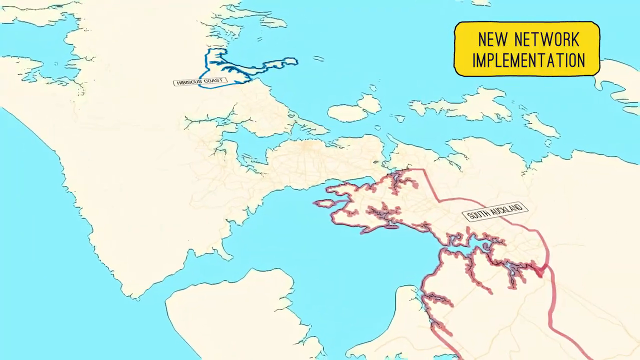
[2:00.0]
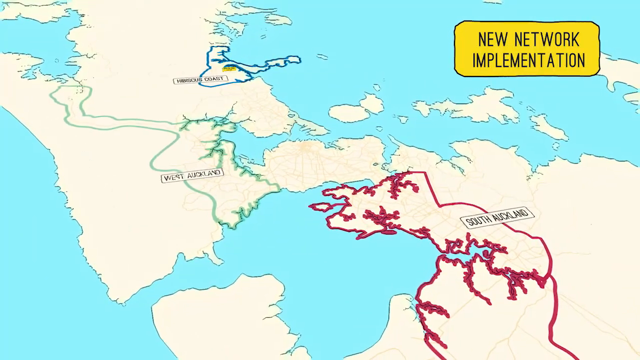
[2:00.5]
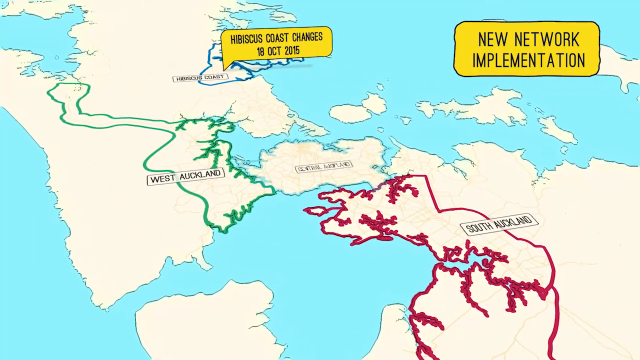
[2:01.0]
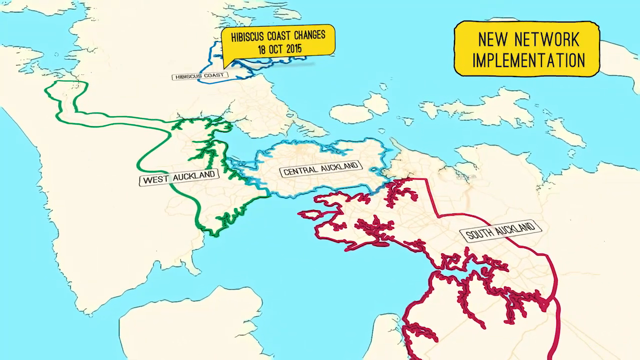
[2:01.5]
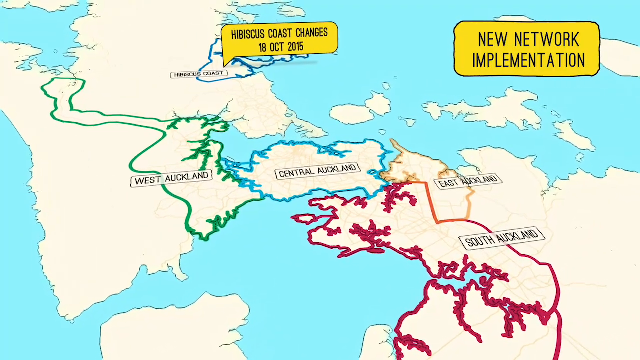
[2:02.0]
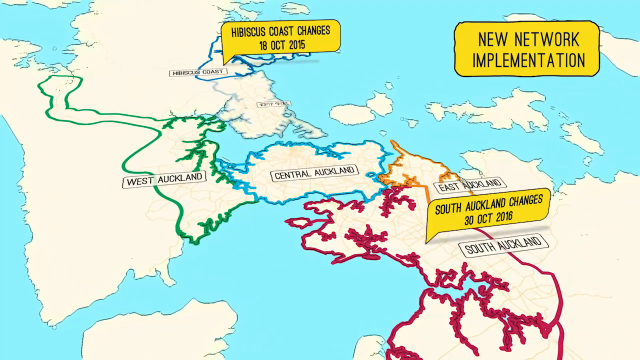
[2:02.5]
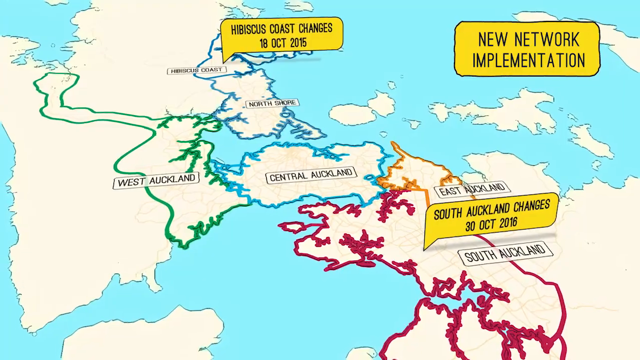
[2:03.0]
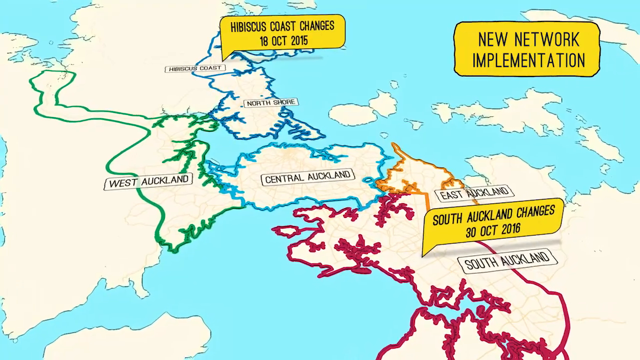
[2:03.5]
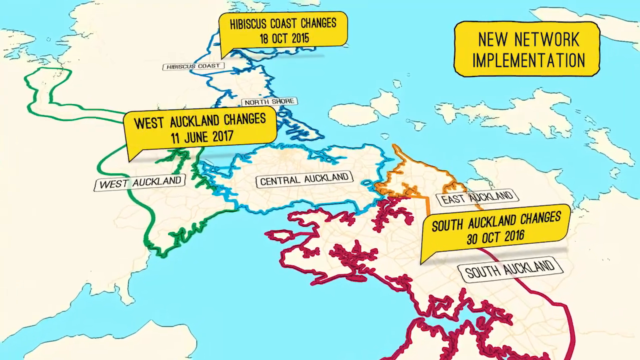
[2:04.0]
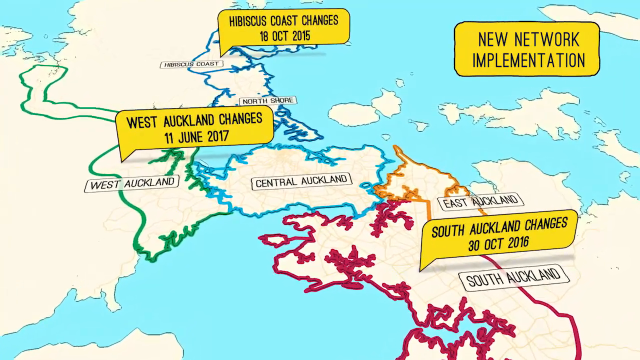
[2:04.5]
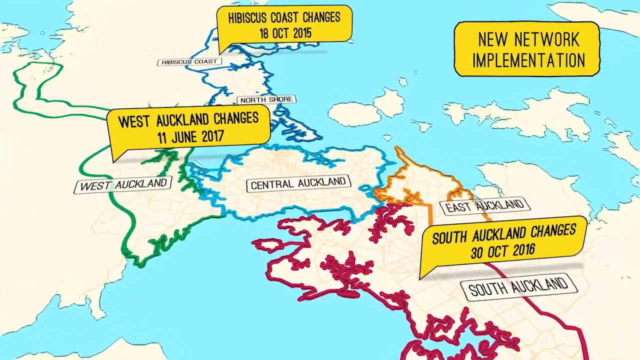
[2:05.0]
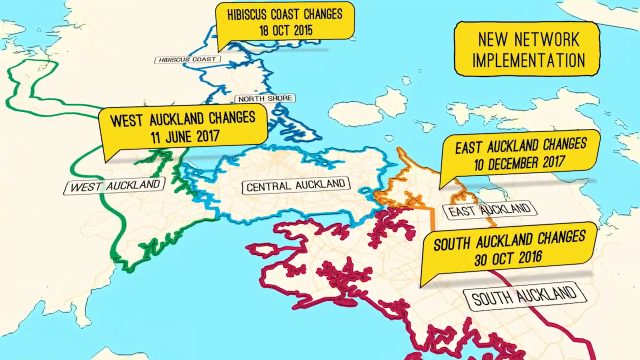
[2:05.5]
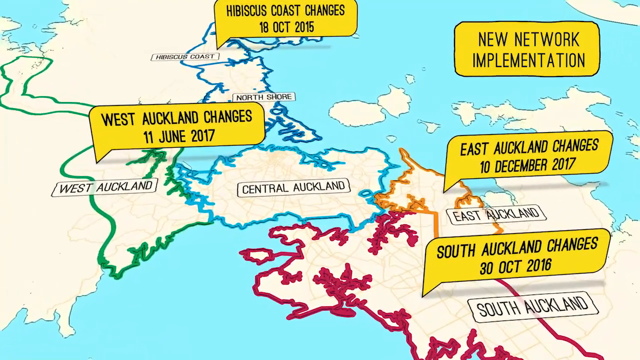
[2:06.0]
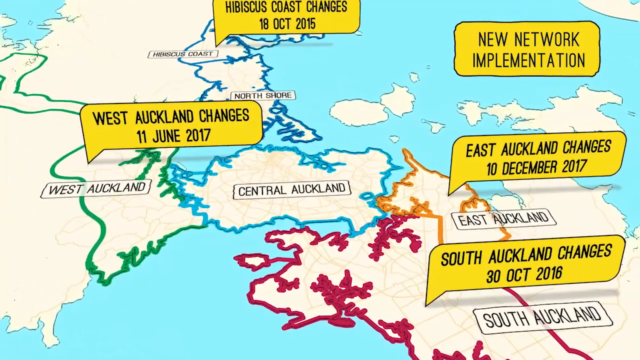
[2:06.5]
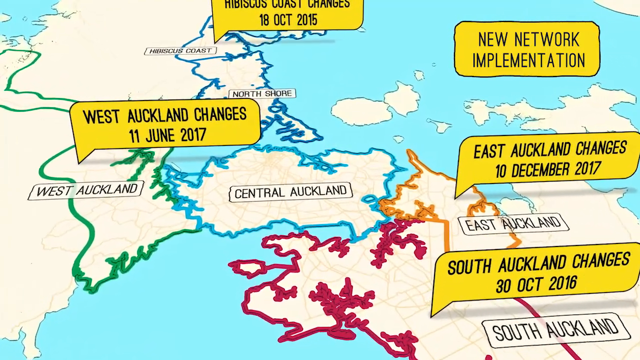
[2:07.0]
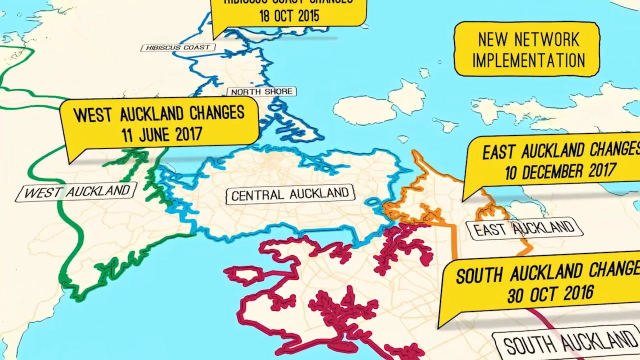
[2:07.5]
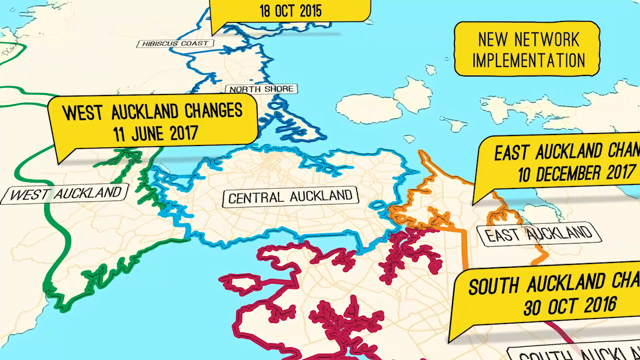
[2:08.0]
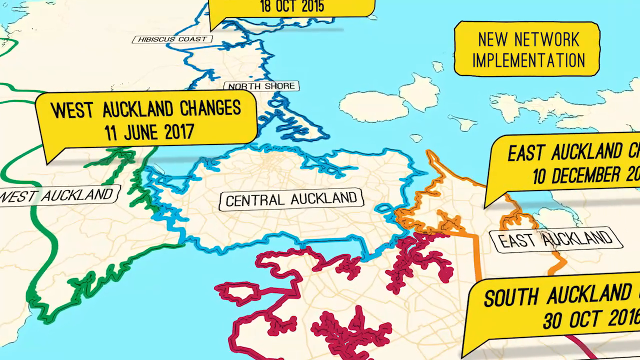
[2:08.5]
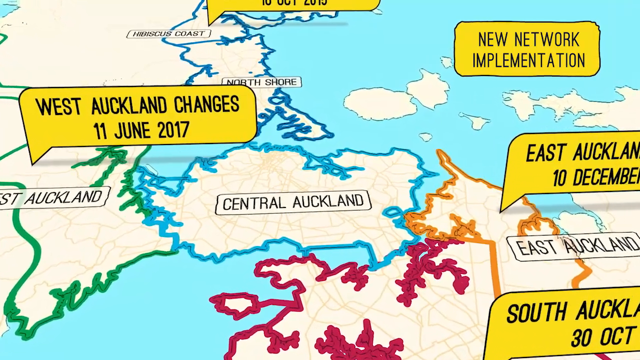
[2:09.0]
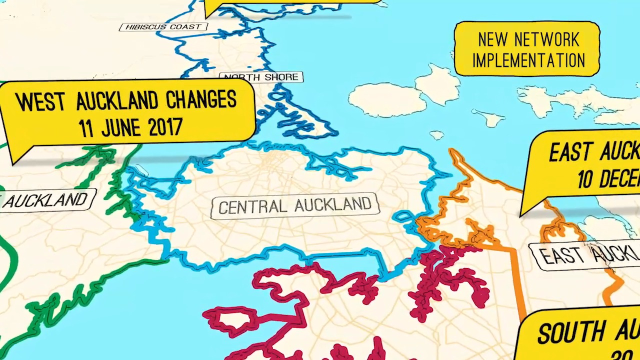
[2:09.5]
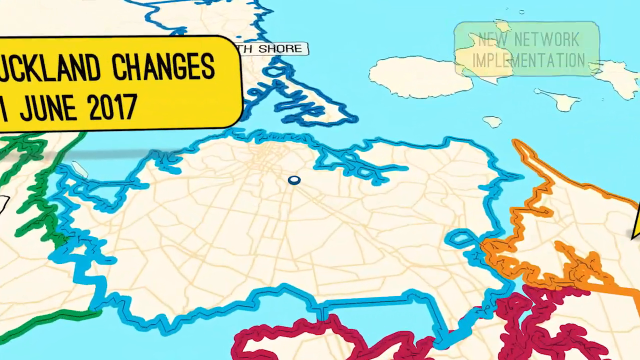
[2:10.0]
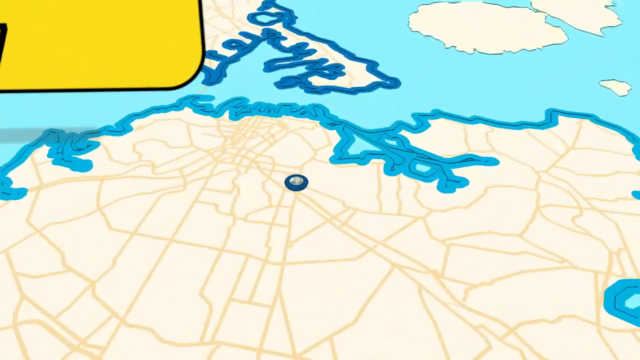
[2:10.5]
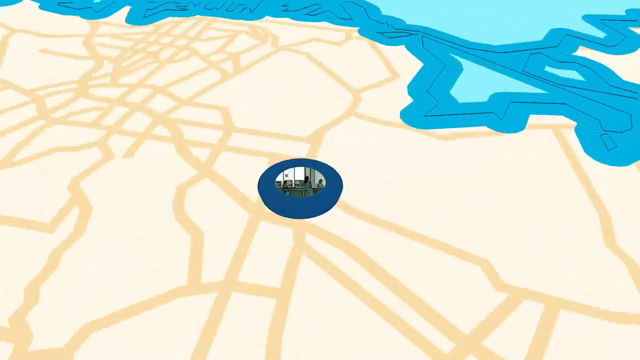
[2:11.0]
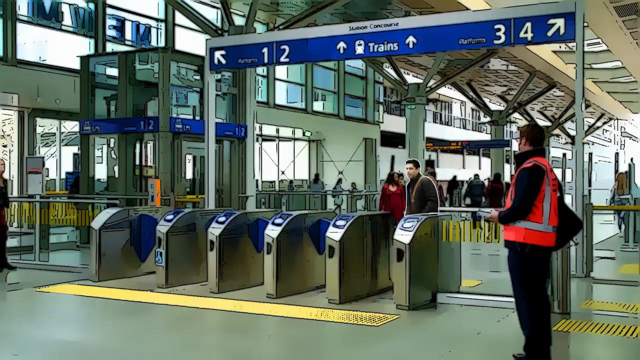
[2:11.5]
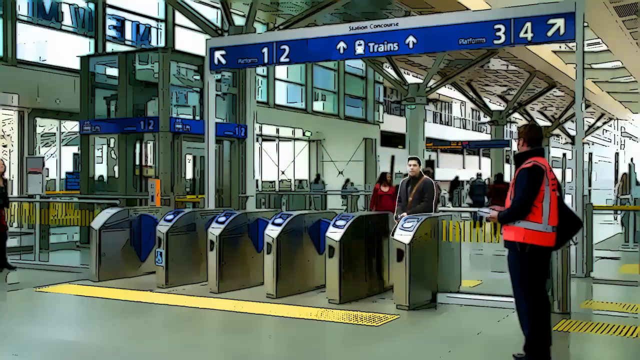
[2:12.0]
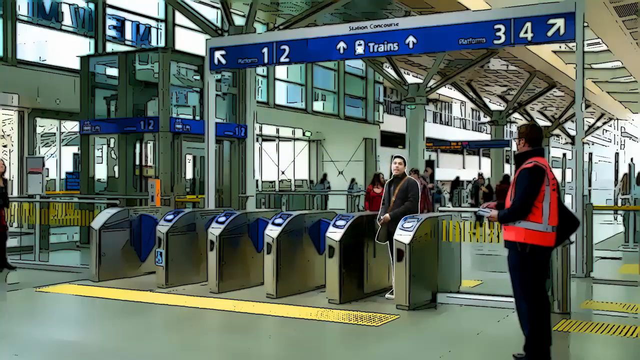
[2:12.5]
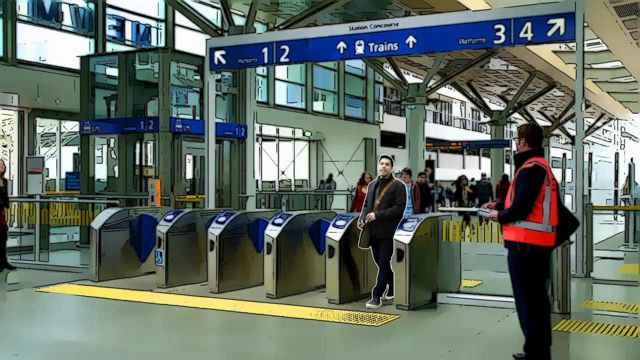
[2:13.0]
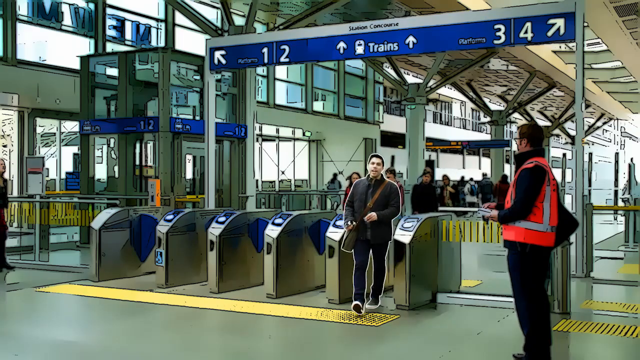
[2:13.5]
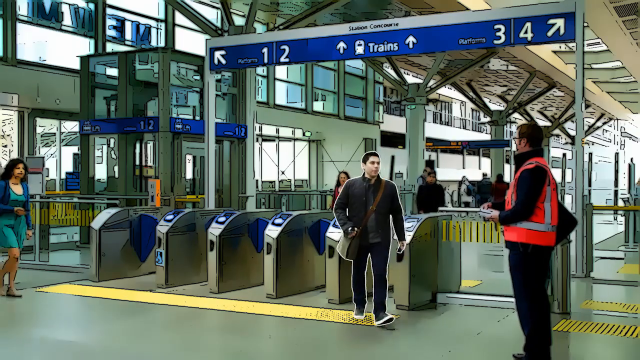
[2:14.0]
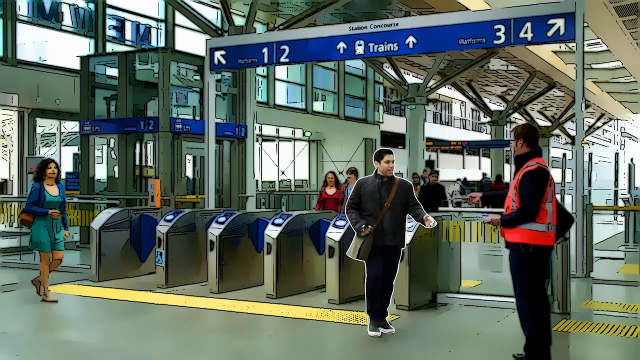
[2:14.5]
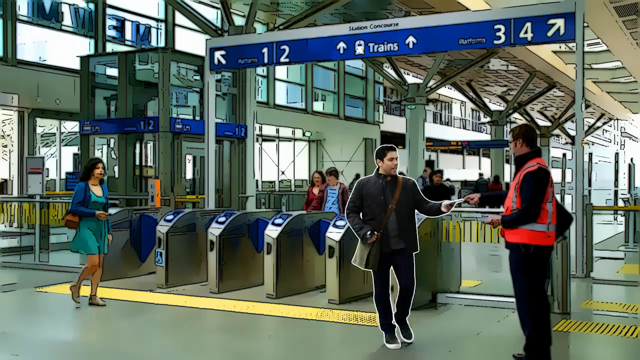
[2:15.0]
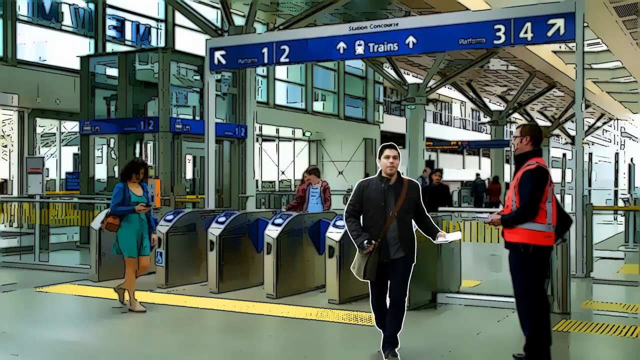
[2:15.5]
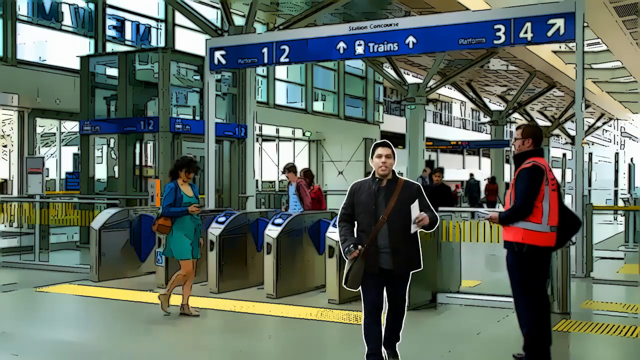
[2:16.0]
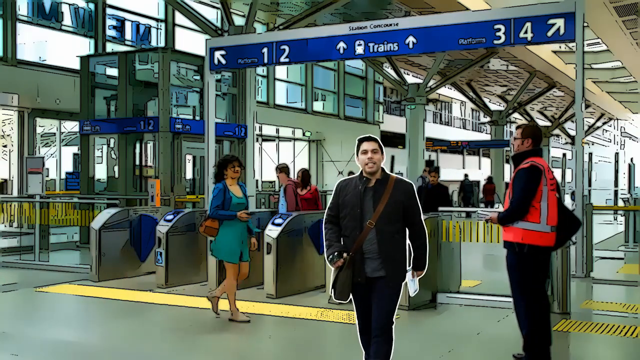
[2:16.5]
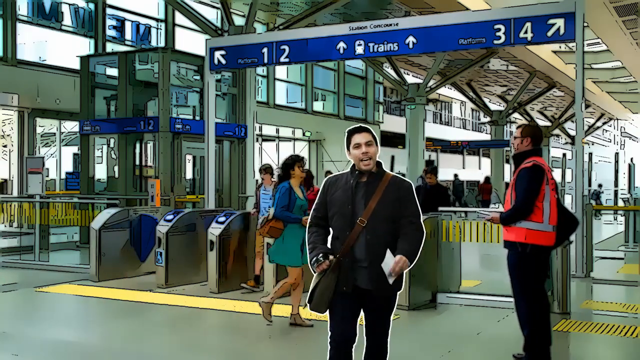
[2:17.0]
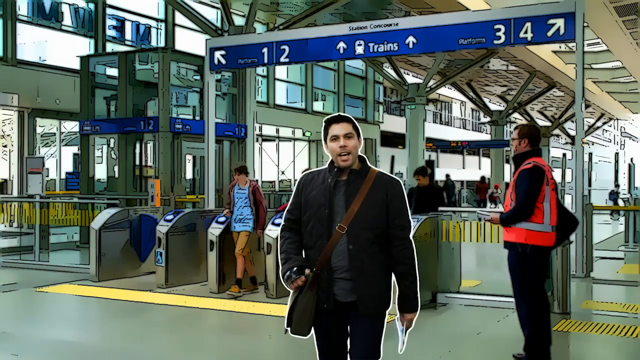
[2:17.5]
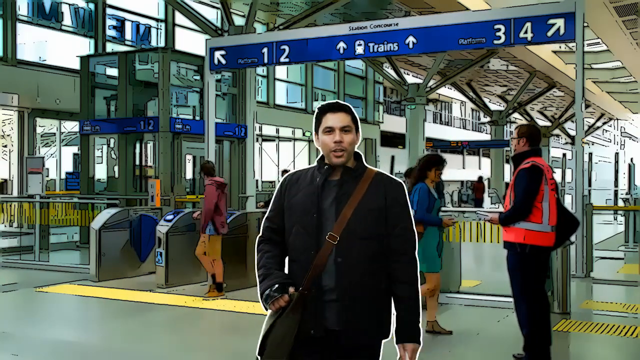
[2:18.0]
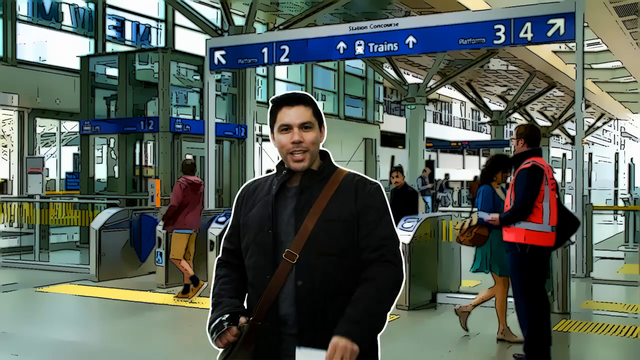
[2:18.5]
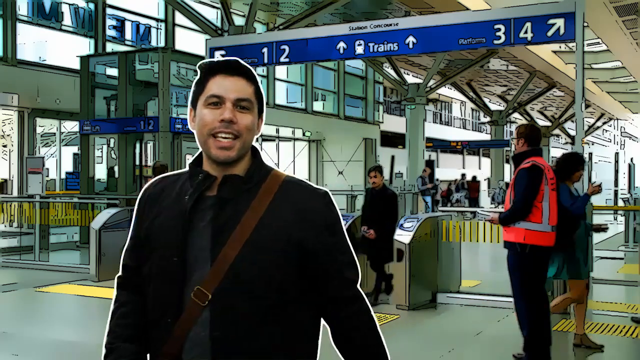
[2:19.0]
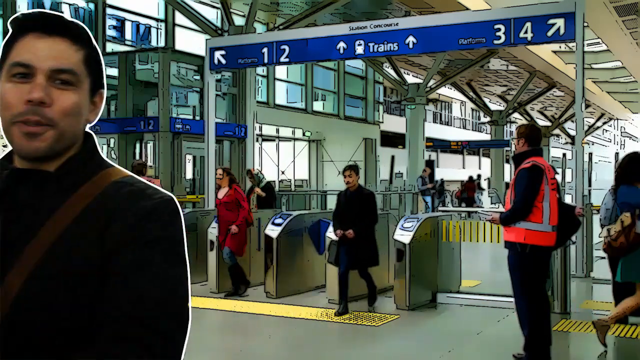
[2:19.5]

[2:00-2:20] A map shows the new network implementation. One section is marked "Hibiscus Coast changes 18th of October 2015", with Hibiscus Coast in a blue outline. West Auckland is marked with a green outline, and Central Auckland, East Auckland and South Auckland are marked with a red outline. The map reads "South Auckland changes 30th of October 2016", "West Auckland changes 11th June 2017" and "East Auckland changes 10th December 2017". The camera moves closer on the map, where the different areas are outlined in different colours, and then focuses on Central Auckland in a pale blue outline. The man in the white outline walks through a train station ticket barrier, with a man in a red high-vis standing in the foreground. The outlined man looks at him, takes a leaflet, and continues walking towards the camera with the leaflet in hand, then walks past the camera.